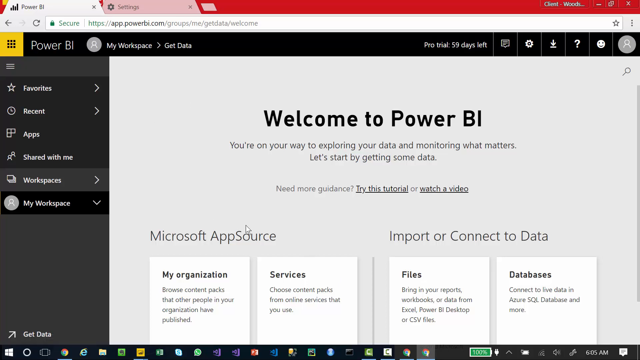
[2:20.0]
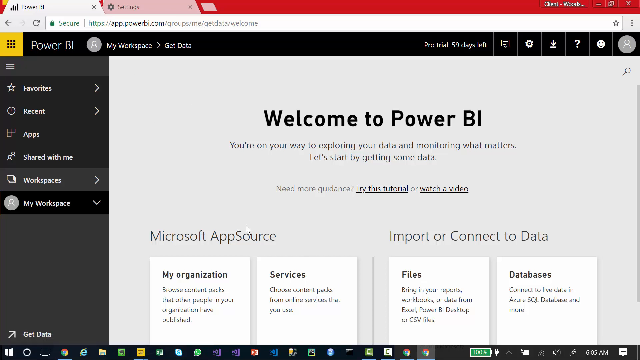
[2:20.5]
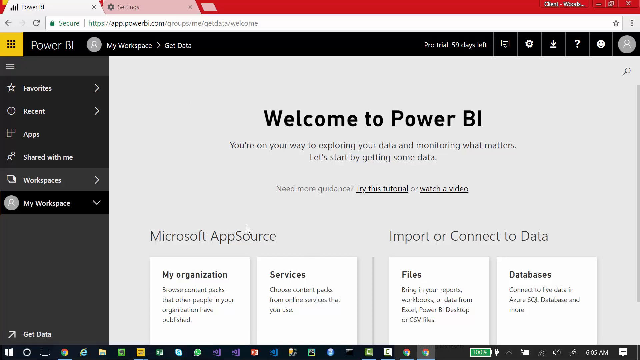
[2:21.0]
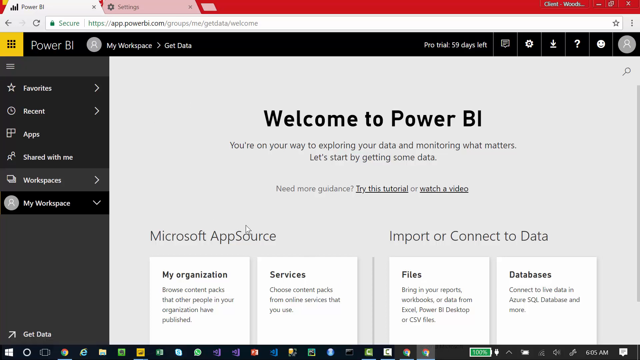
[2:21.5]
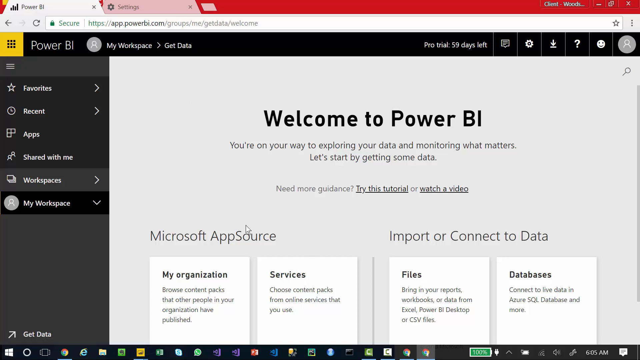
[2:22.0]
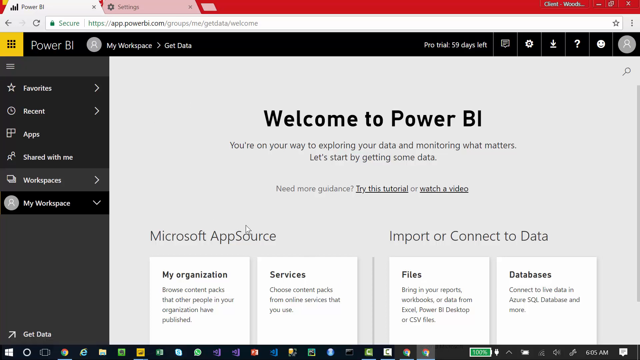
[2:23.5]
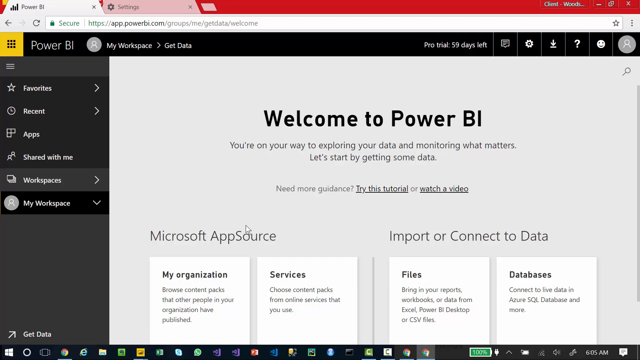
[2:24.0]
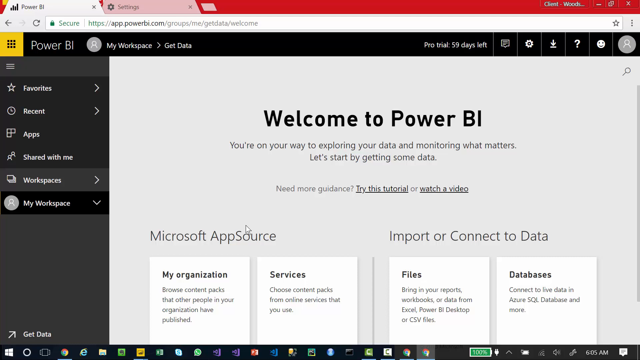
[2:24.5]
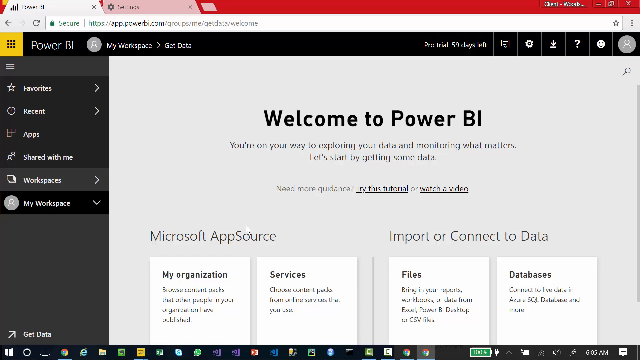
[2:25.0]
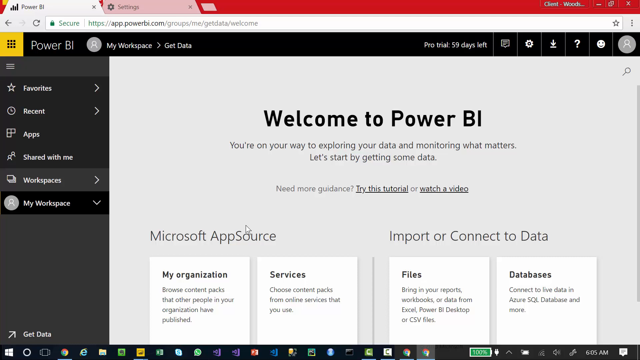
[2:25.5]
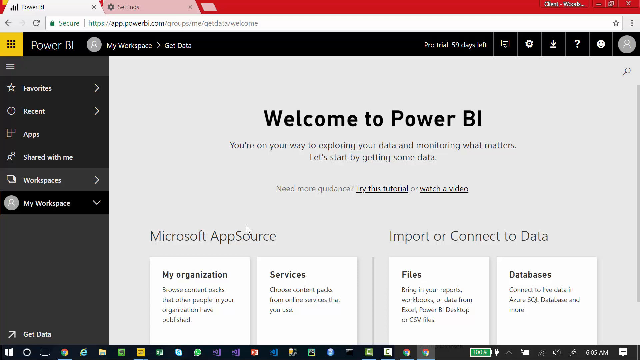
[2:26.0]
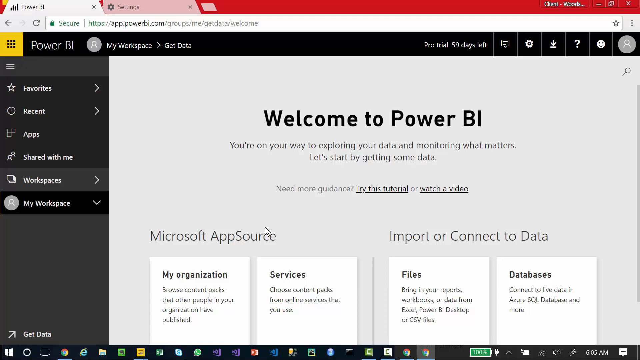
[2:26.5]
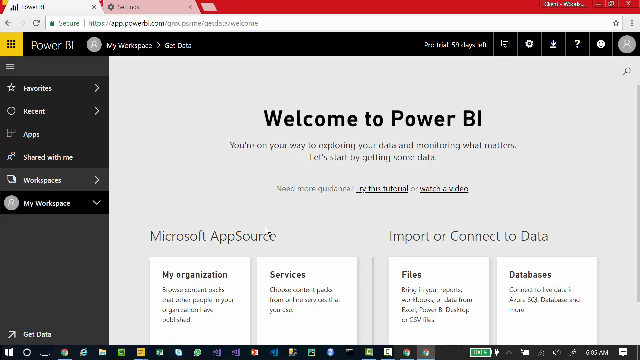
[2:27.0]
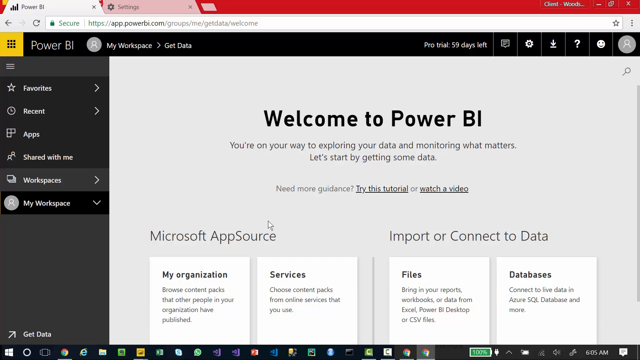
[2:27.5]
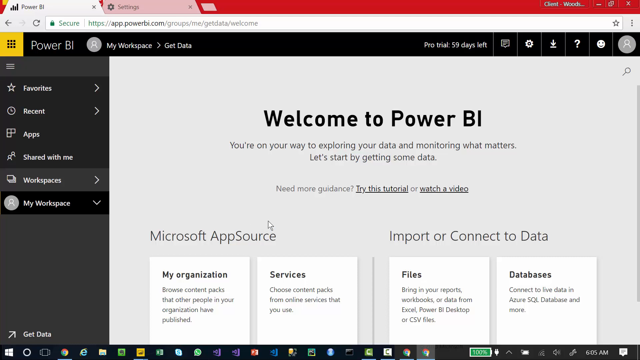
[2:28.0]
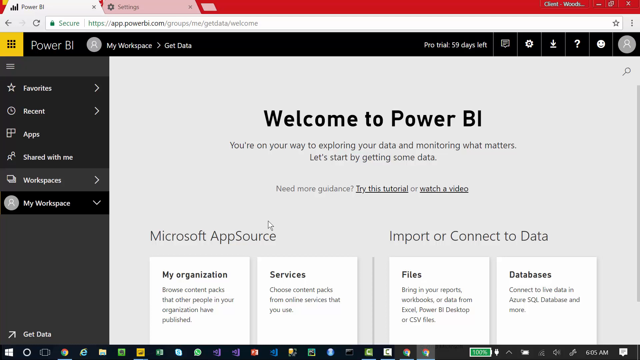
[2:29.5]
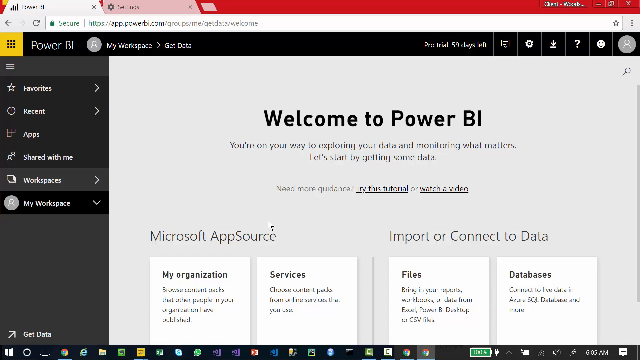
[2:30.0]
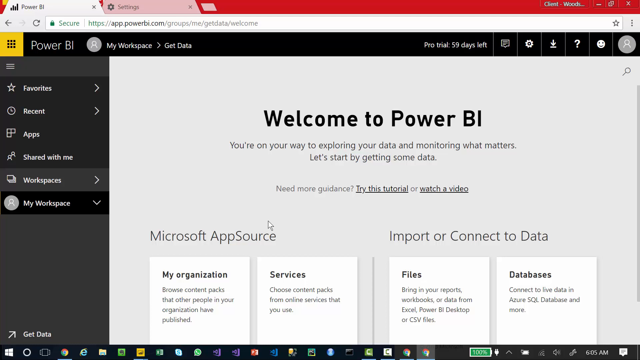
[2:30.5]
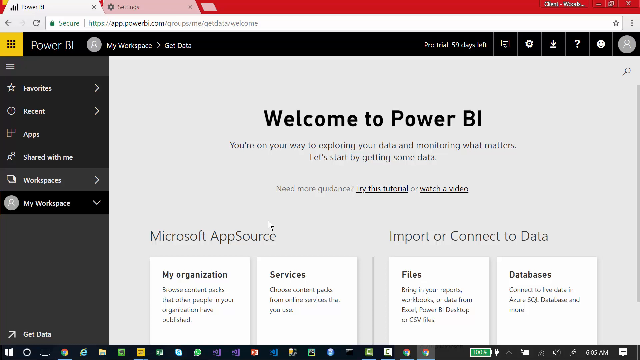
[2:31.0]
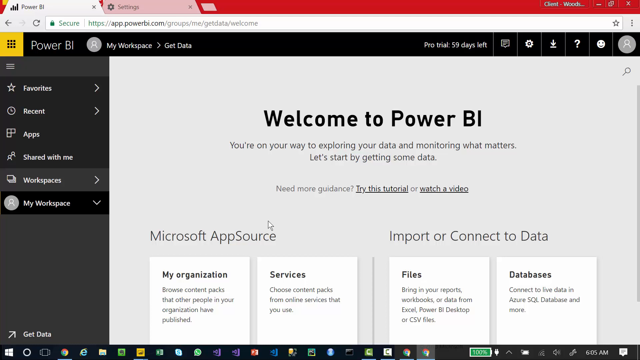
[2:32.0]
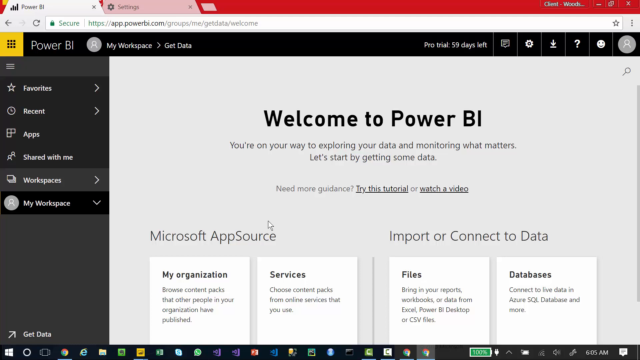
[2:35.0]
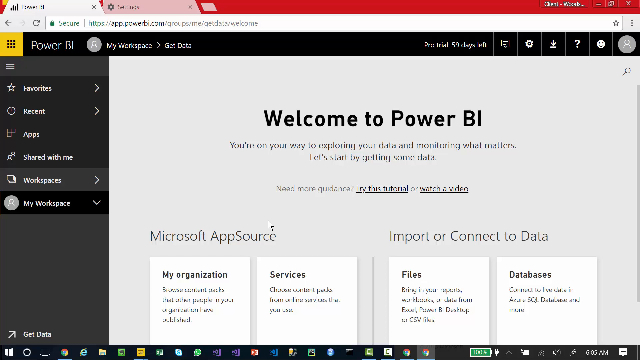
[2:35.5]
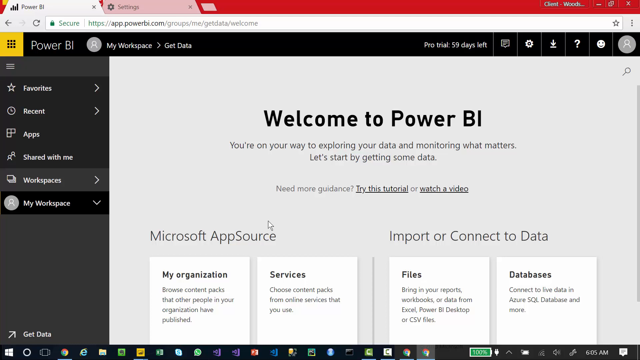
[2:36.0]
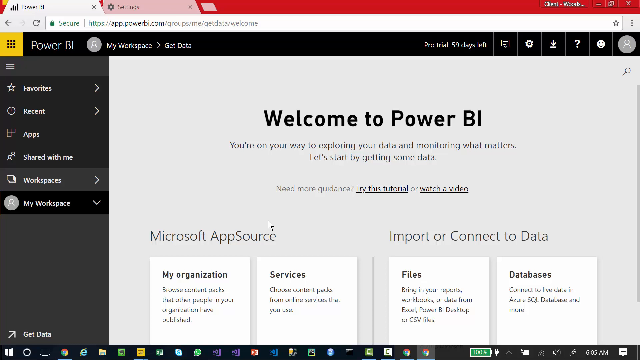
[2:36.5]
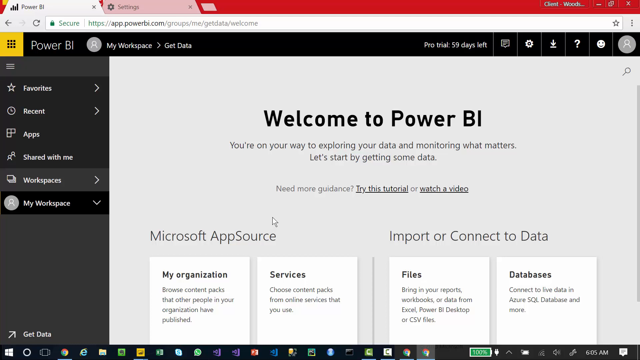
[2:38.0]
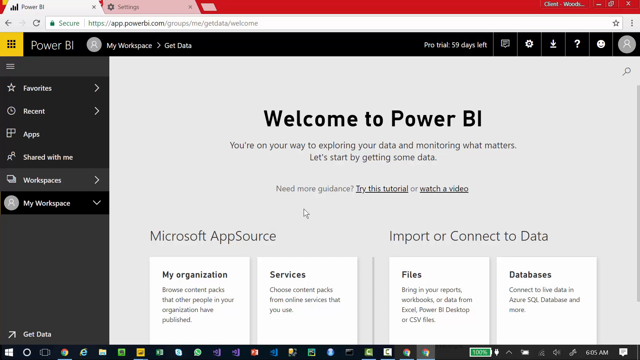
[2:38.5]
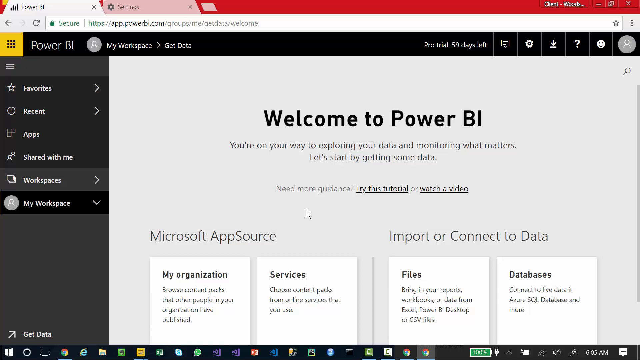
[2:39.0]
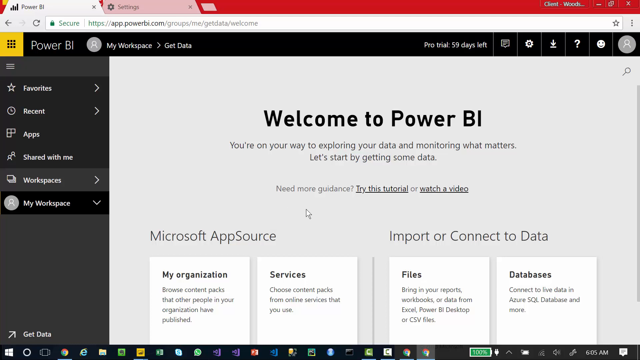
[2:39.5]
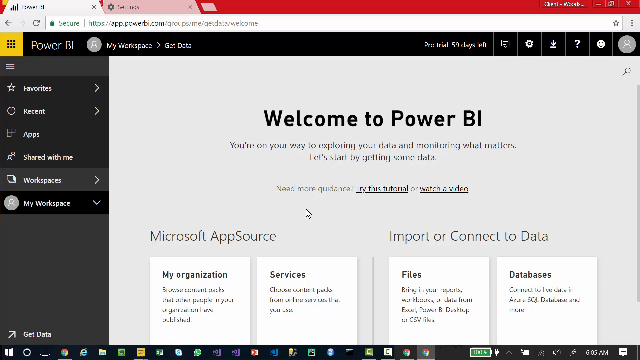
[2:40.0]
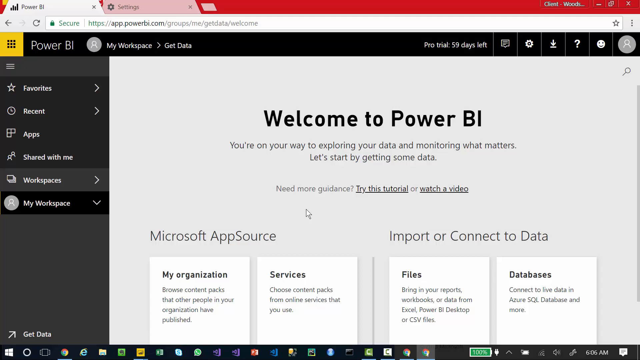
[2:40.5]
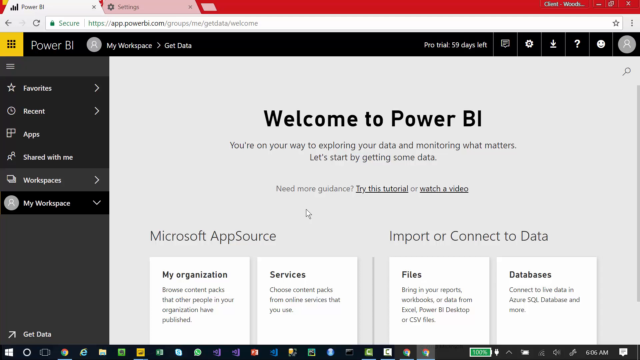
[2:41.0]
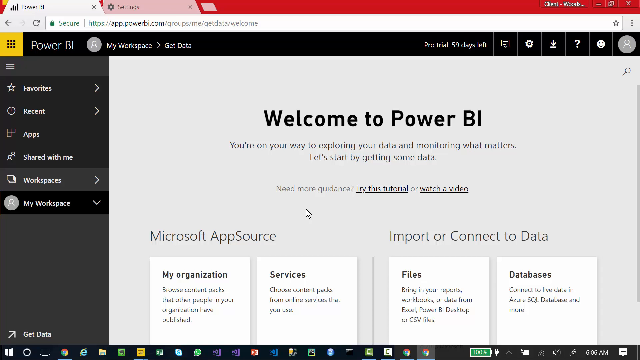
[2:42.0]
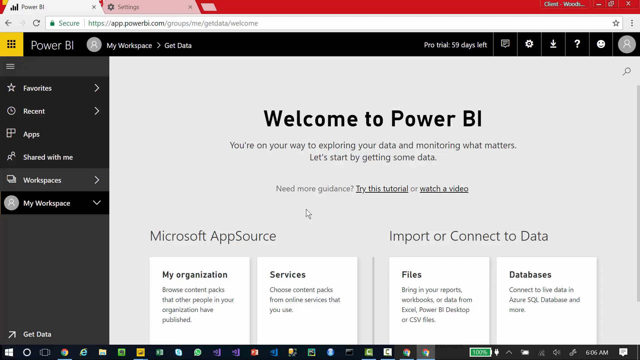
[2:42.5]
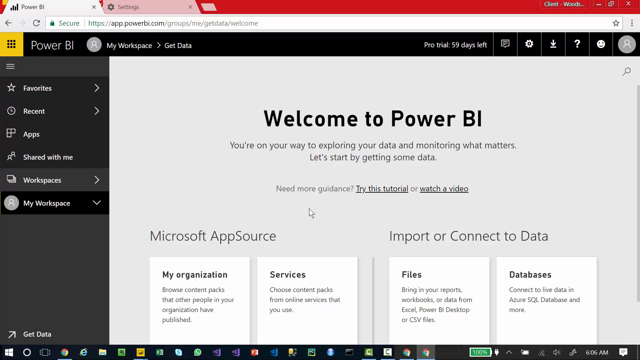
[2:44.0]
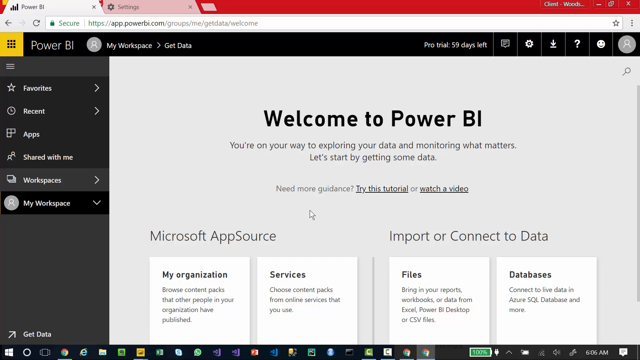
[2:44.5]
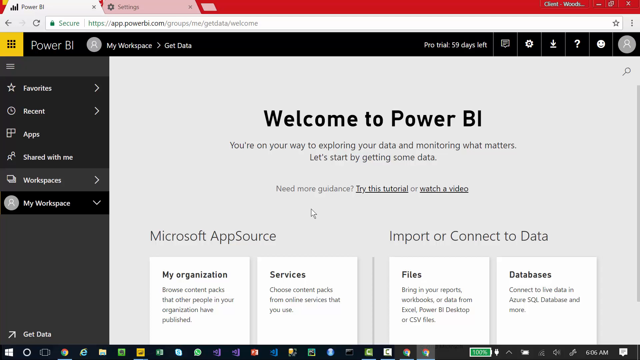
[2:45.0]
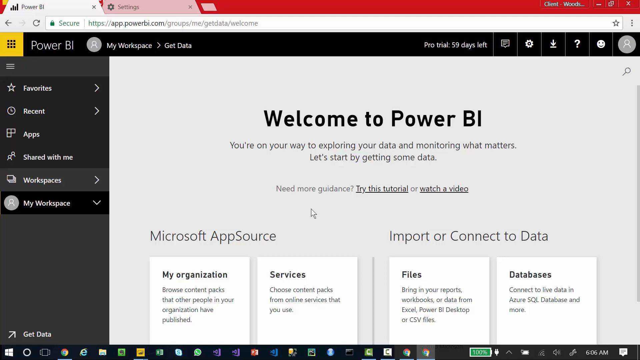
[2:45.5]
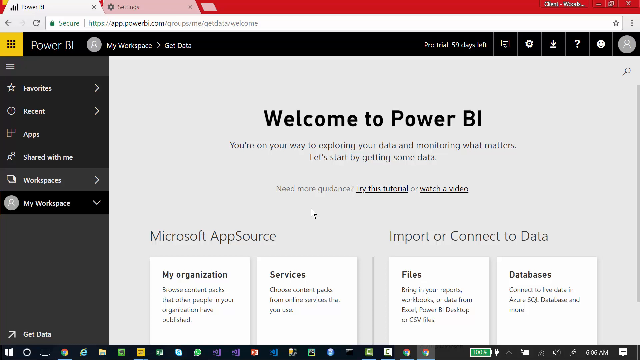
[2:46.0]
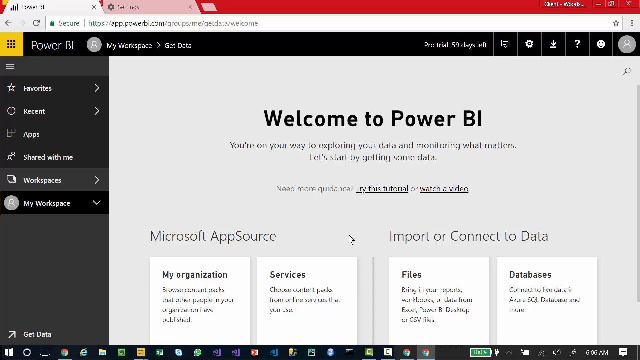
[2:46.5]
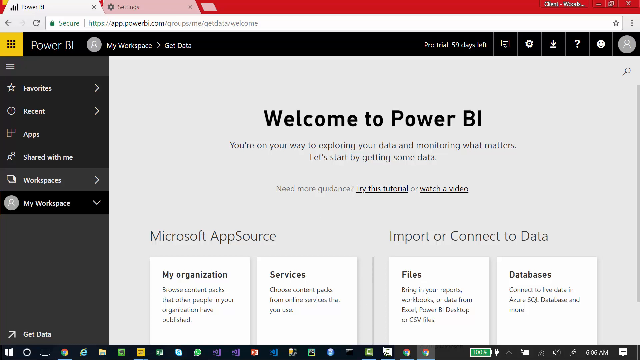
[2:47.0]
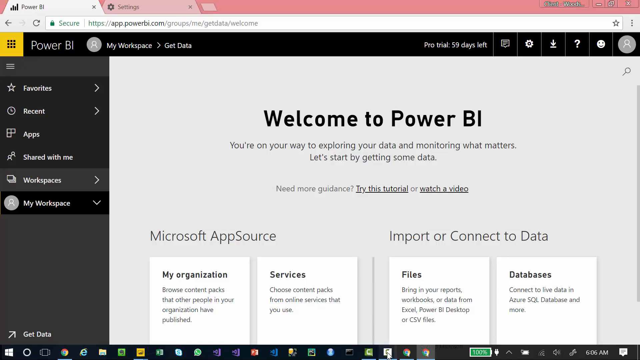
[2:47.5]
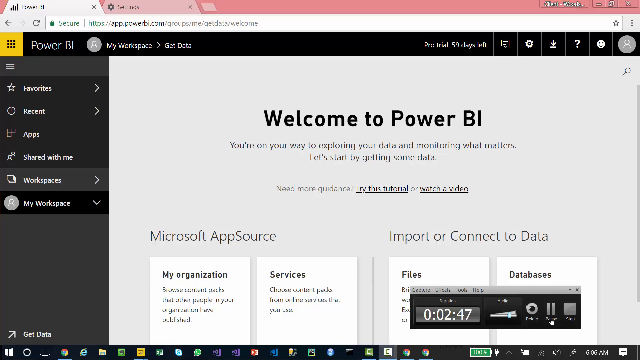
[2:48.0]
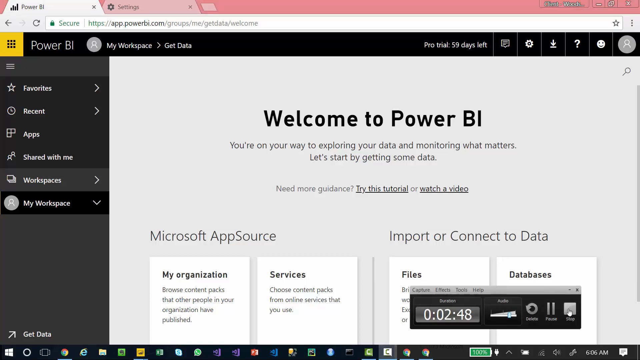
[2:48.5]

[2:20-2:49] A page called "Welcome to Power BI" is shown, with options for Microsoft AppSource and importing or connecting to data, and areas such as my organization, services, files and databases. It says "you're on your way to exploring your data and monitoring what matters let's get started by getting some data." Workspace options include shared with me, apps, recent and favorites.